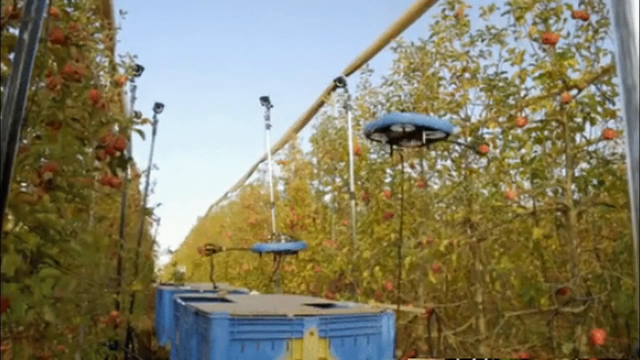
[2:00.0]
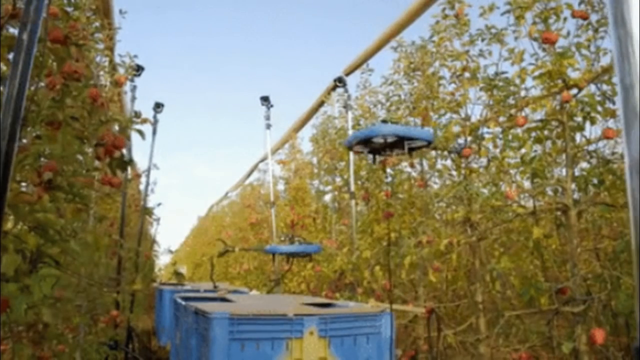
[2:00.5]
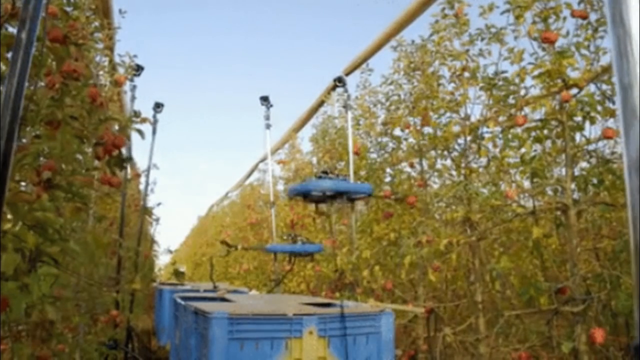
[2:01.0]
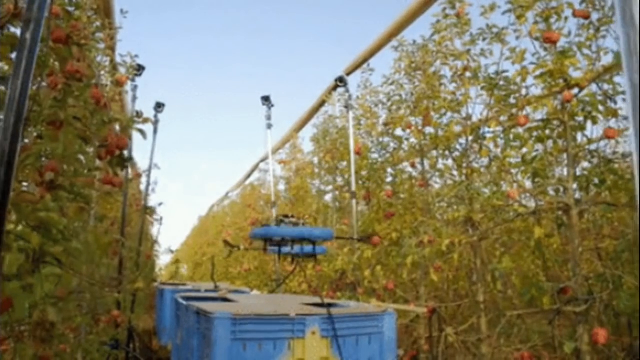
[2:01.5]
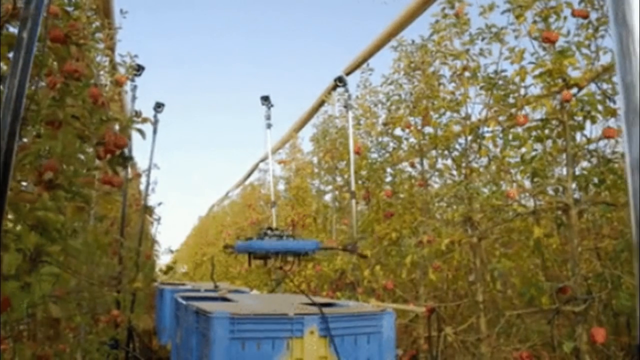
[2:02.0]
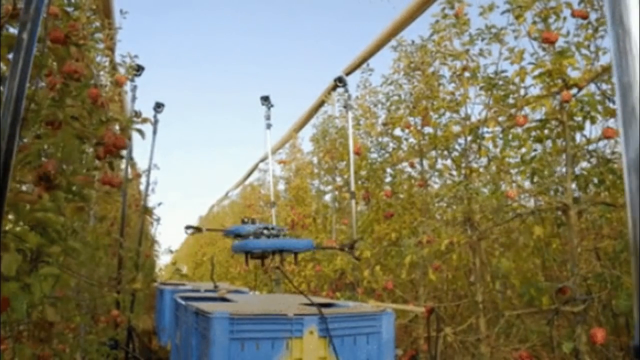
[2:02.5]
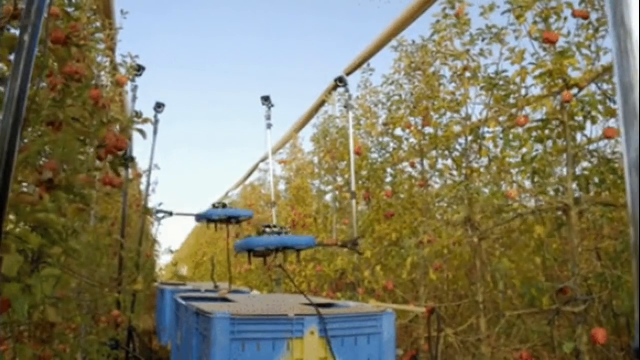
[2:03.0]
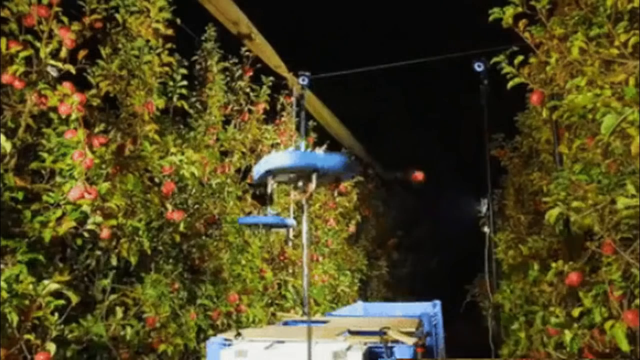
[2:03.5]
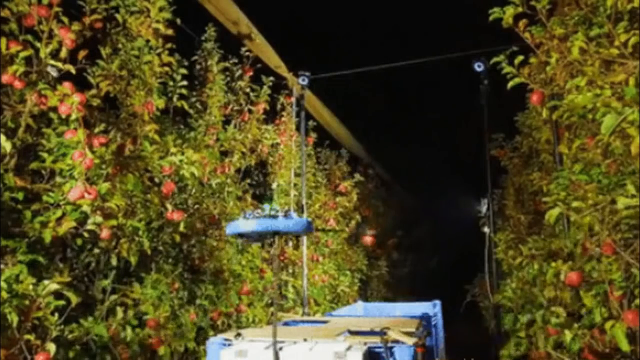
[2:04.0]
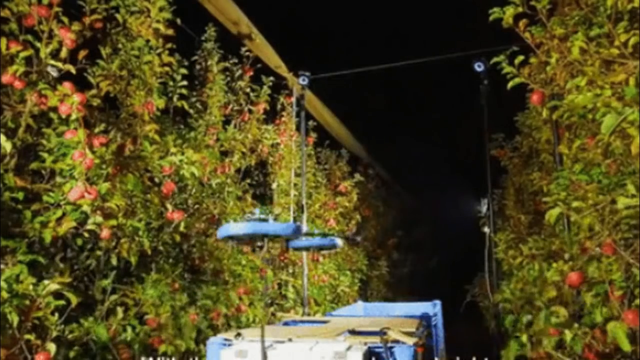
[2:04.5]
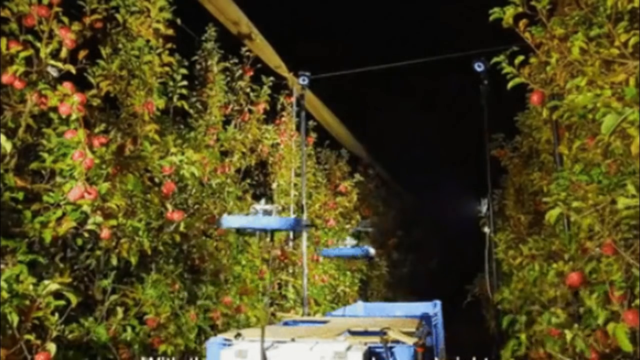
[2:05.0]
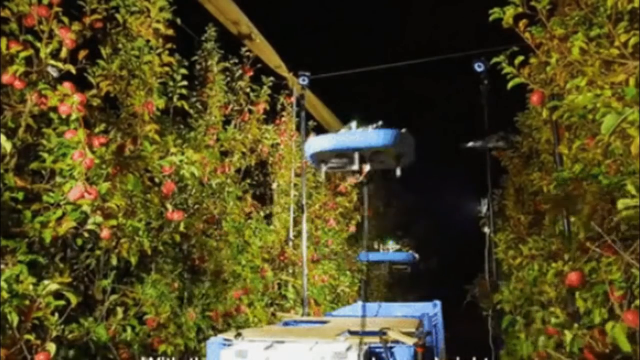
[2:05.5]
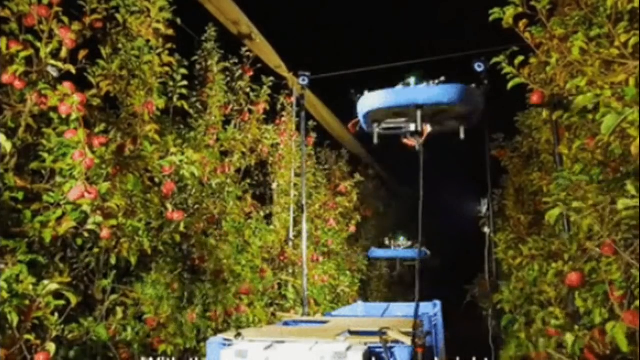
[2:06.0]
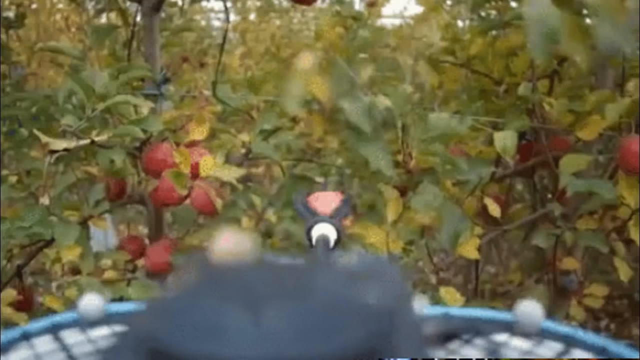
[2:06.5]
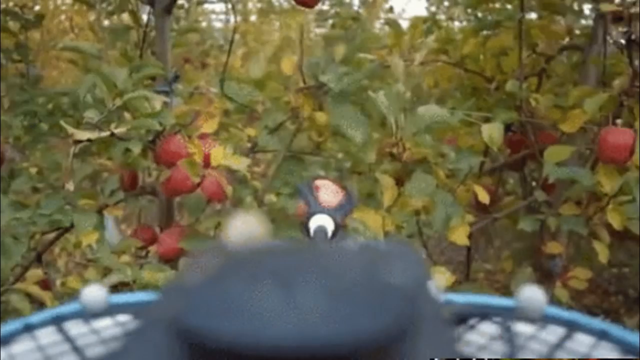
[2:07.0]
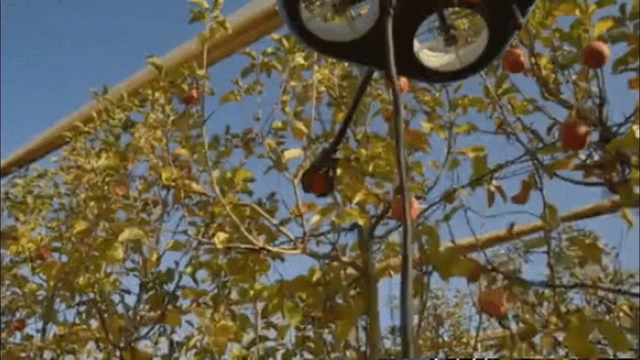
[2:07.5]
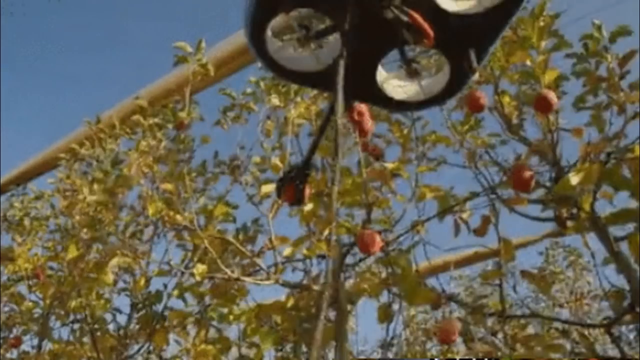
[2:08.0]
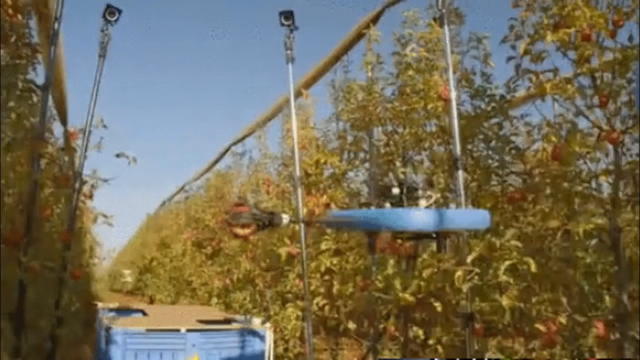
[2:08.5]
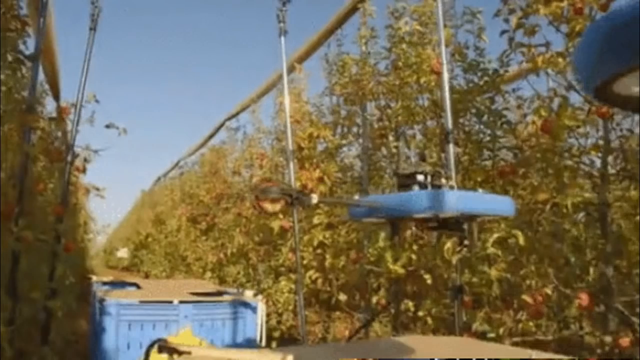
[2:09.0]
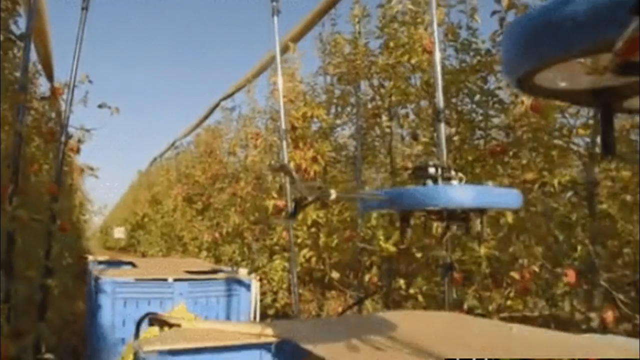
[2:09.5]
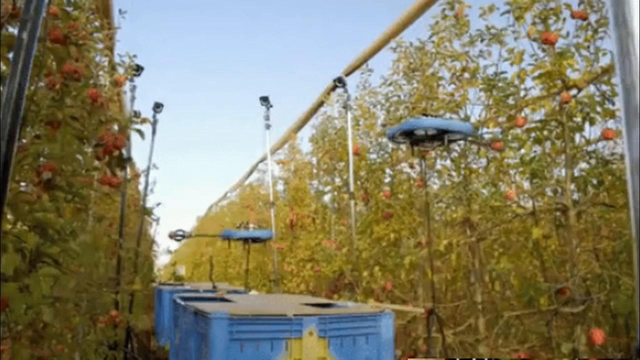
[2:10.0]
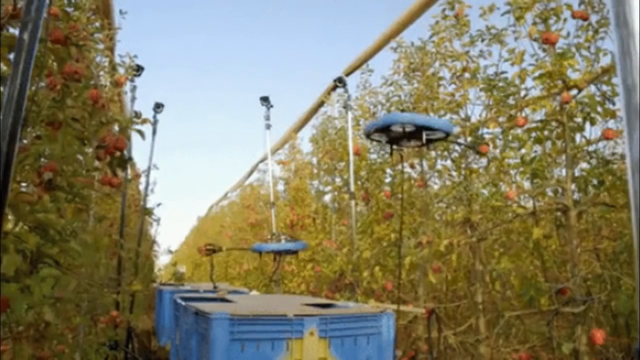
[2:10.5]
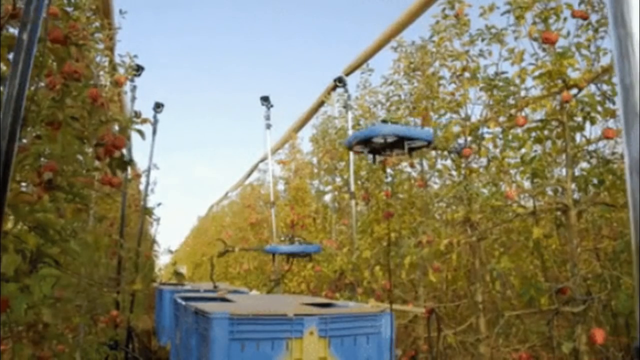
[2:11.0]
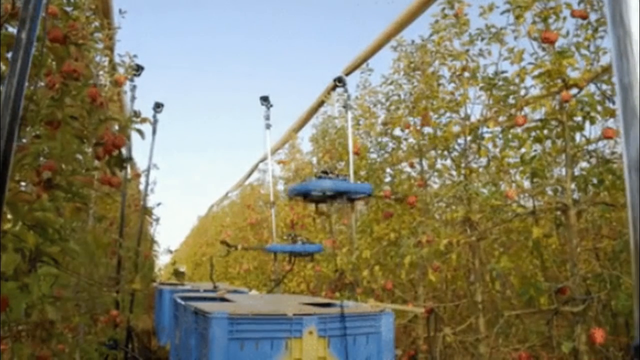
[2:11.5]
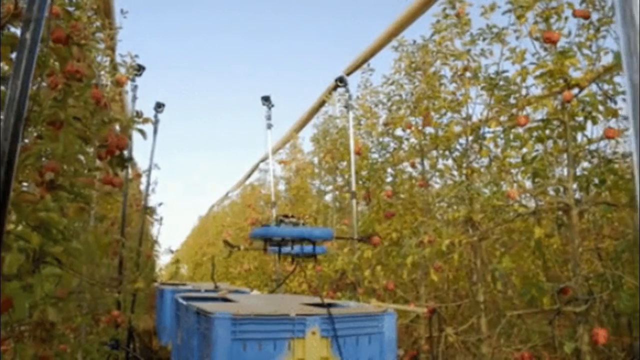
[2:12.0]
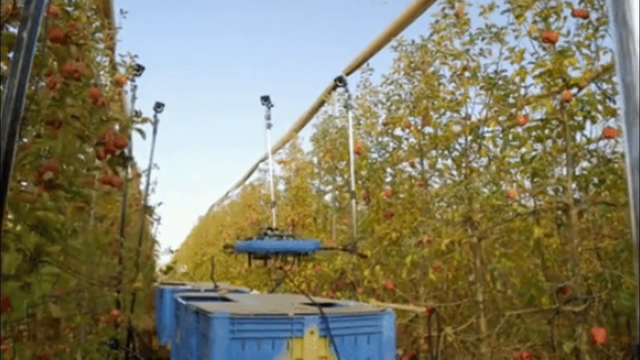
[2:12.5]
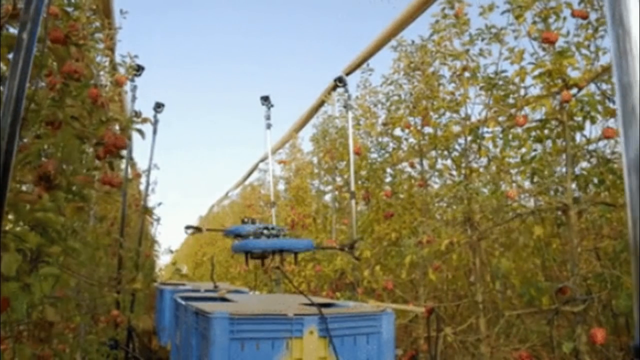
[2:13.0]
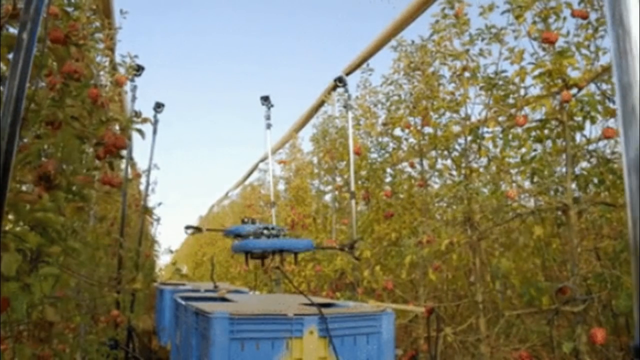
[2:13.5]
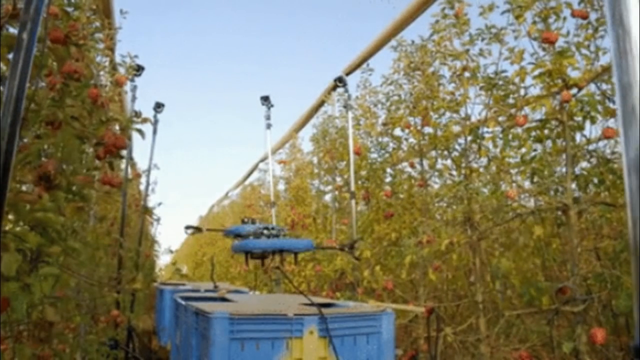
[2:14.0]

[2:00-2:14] In daytime, fruit trees line both sides and equipment is in the center, apparently used for lighting. It immediately changes to night: the sky is completely black, and the equipment illuminates the area so that it is very well lit.